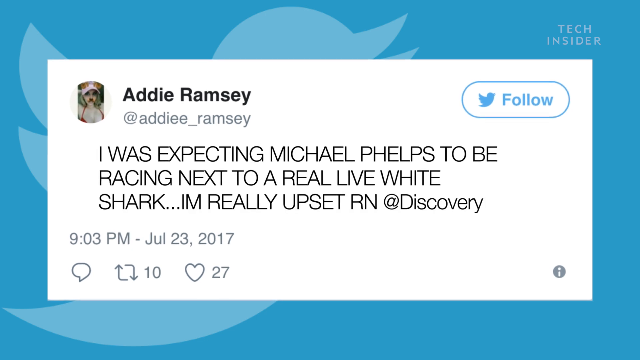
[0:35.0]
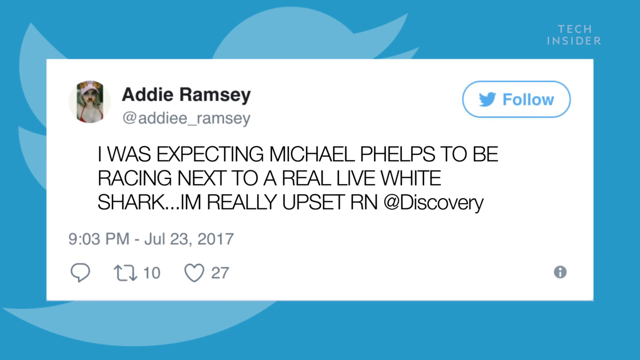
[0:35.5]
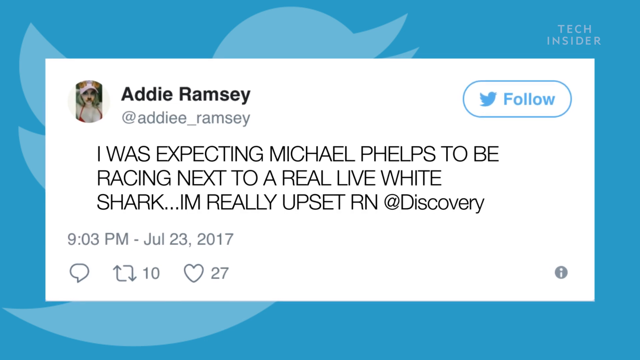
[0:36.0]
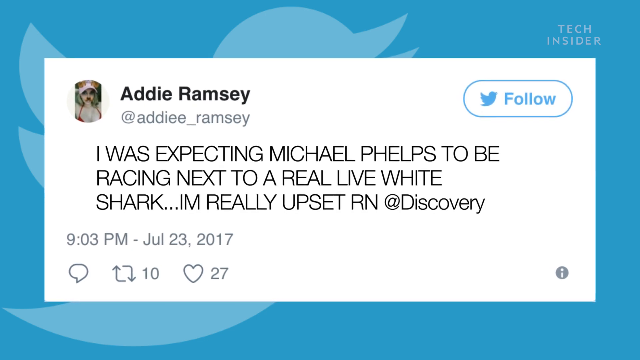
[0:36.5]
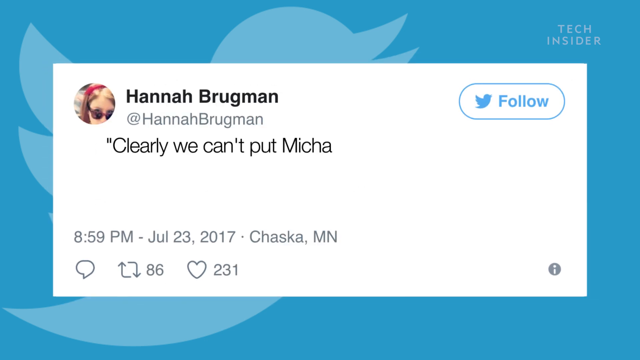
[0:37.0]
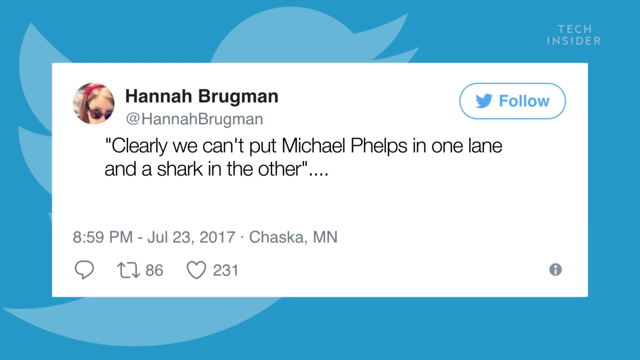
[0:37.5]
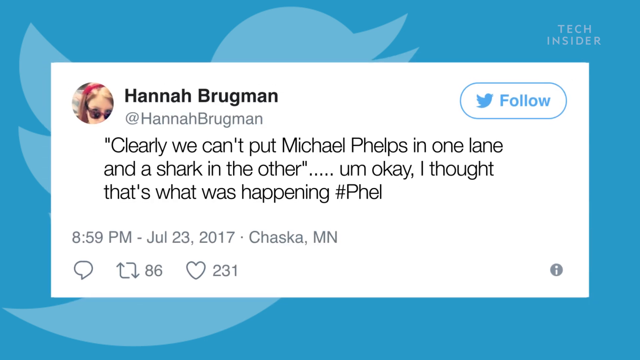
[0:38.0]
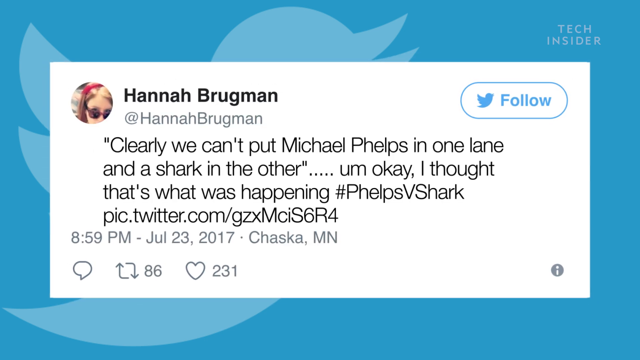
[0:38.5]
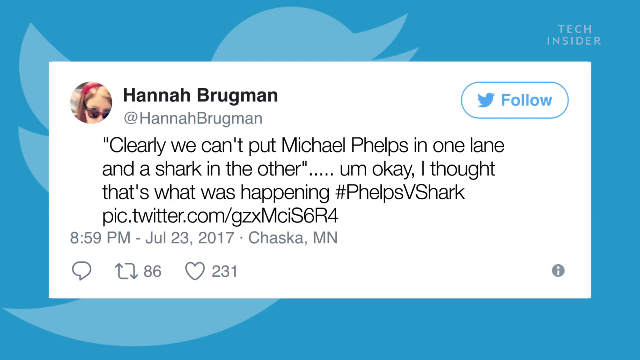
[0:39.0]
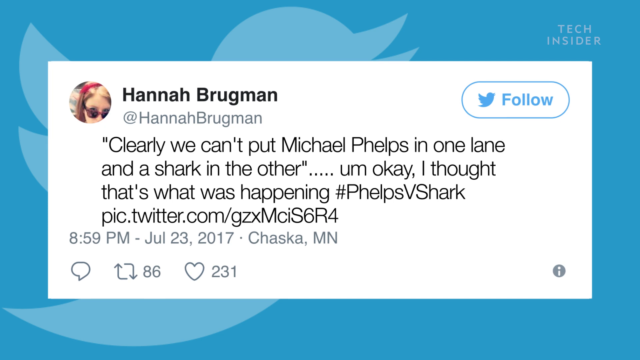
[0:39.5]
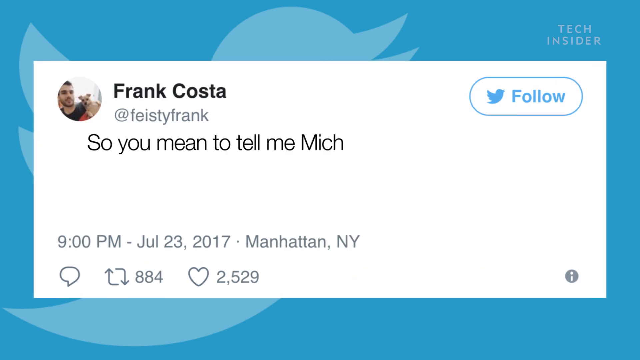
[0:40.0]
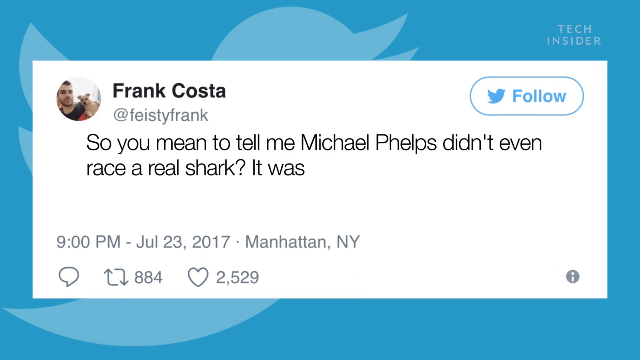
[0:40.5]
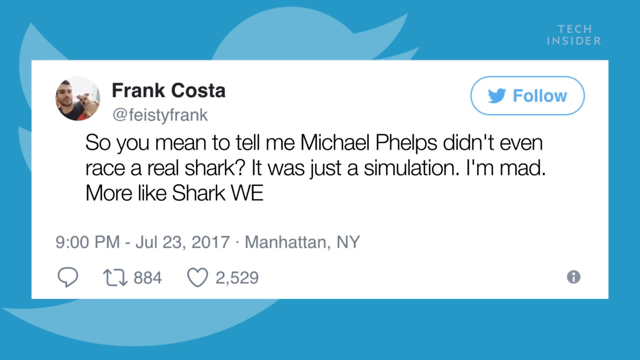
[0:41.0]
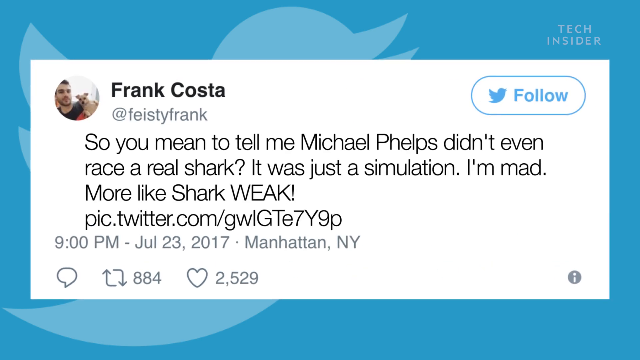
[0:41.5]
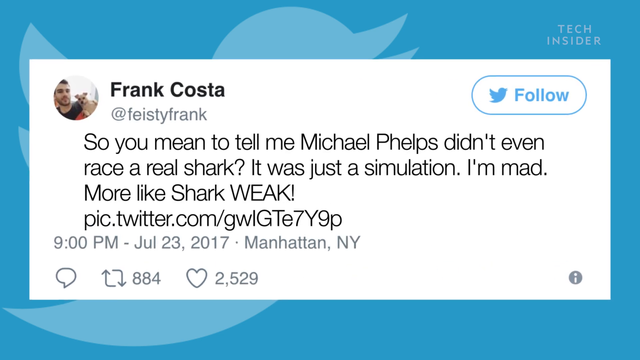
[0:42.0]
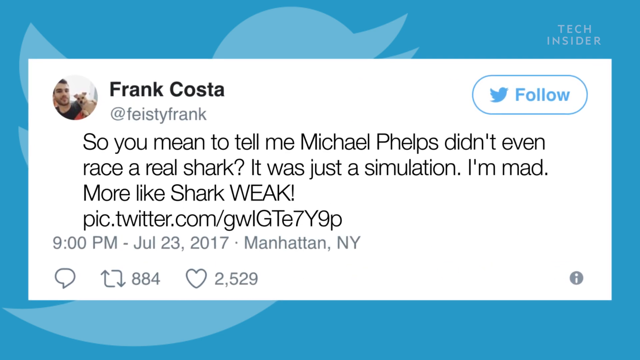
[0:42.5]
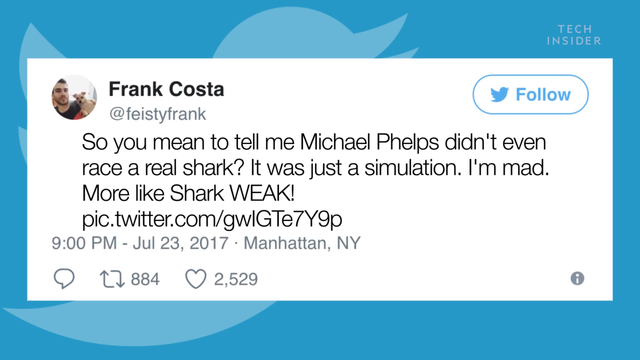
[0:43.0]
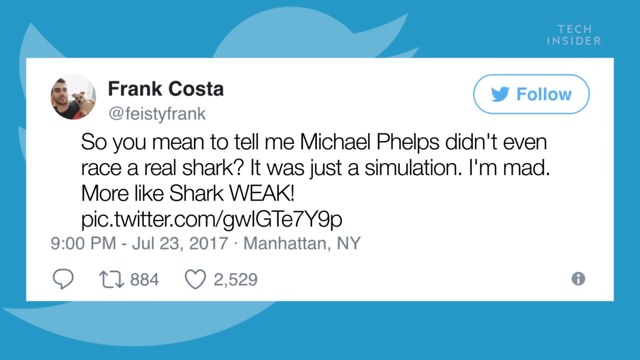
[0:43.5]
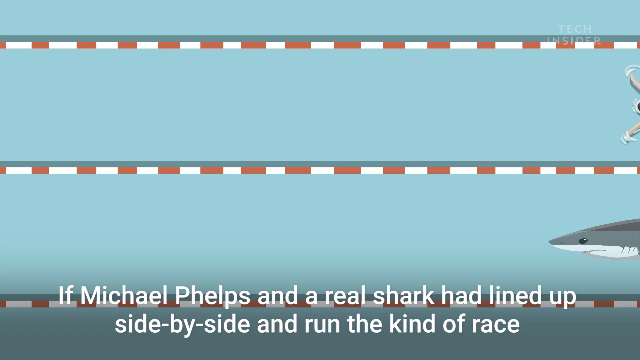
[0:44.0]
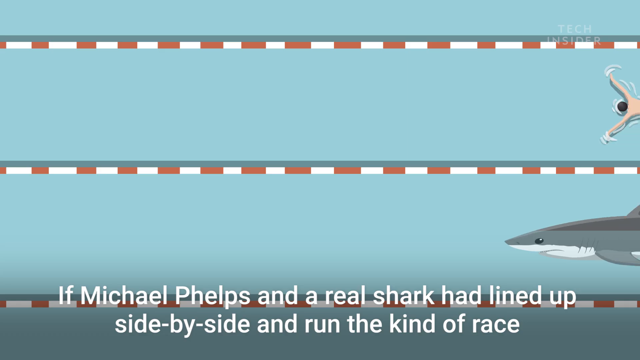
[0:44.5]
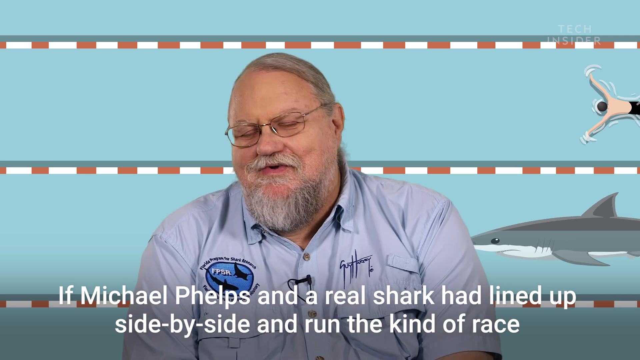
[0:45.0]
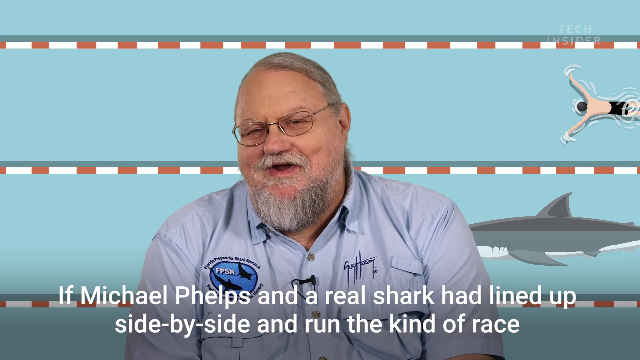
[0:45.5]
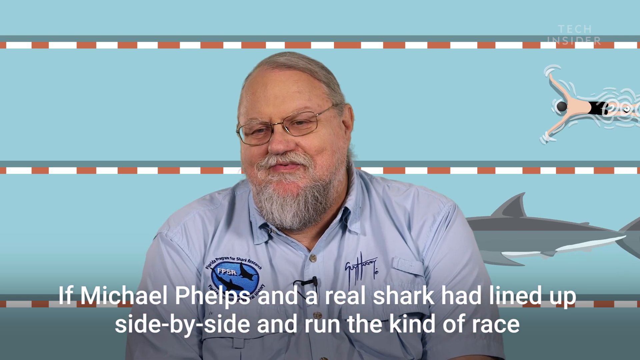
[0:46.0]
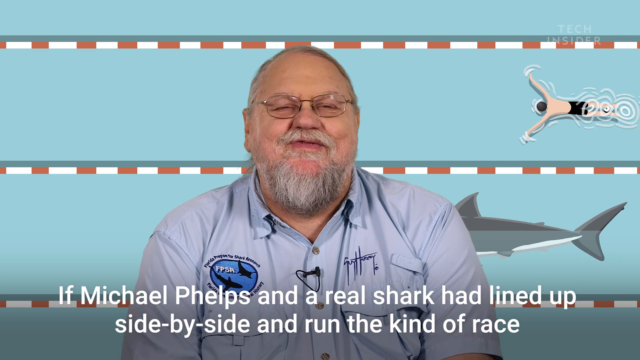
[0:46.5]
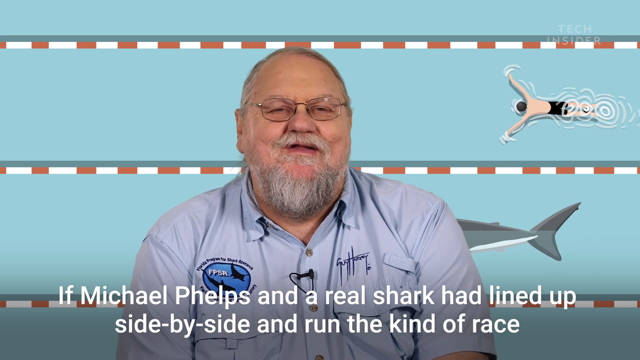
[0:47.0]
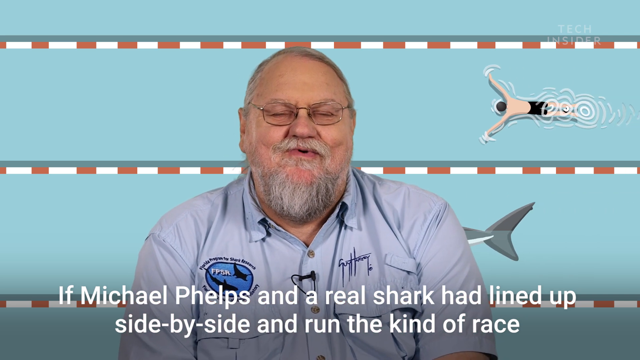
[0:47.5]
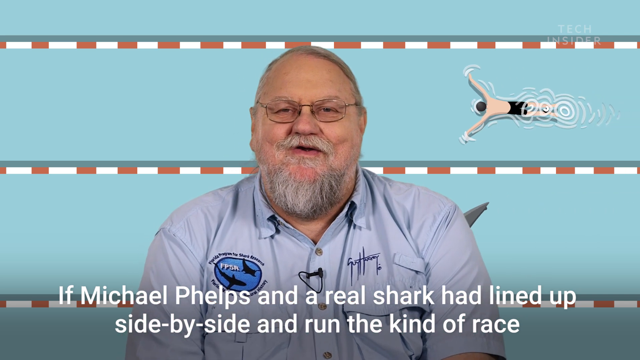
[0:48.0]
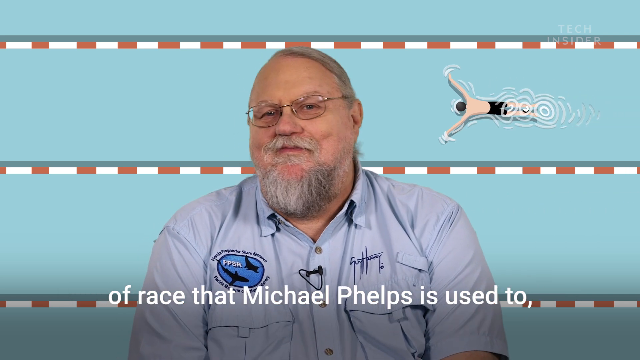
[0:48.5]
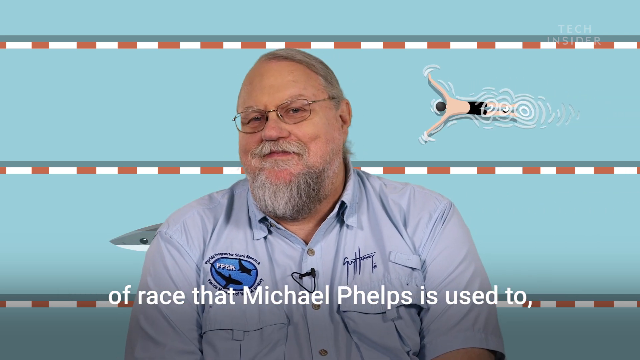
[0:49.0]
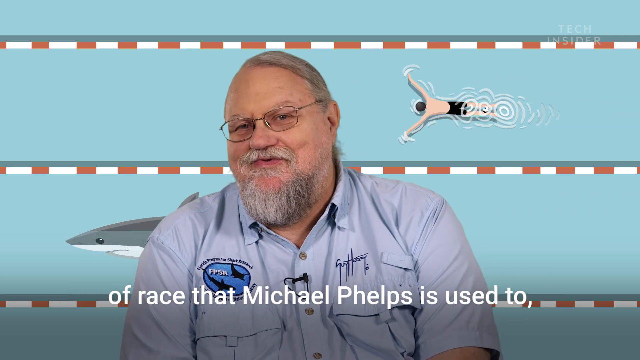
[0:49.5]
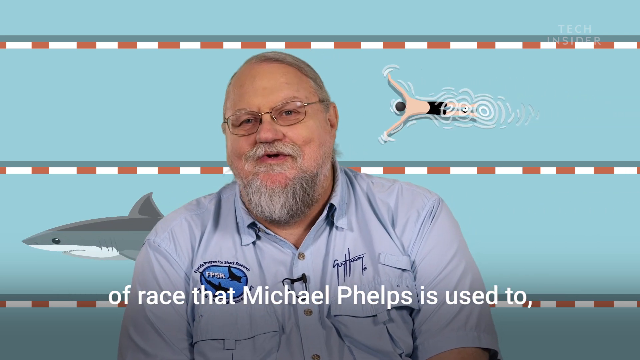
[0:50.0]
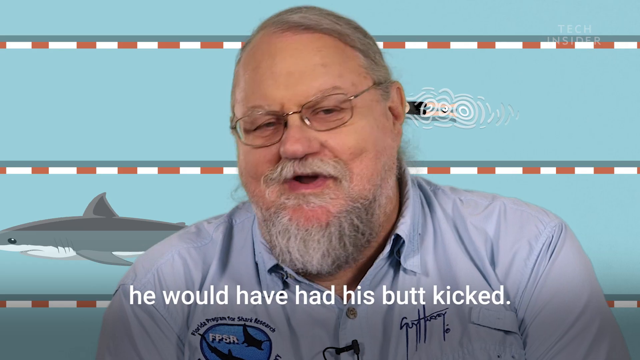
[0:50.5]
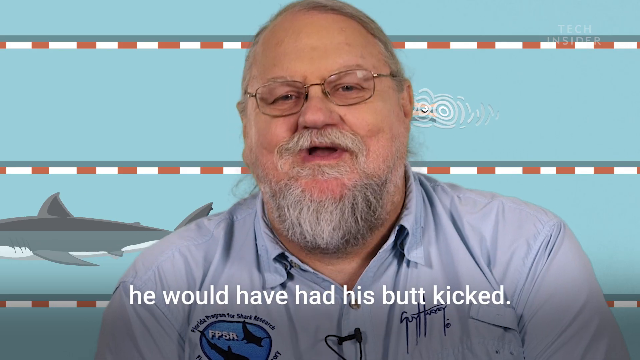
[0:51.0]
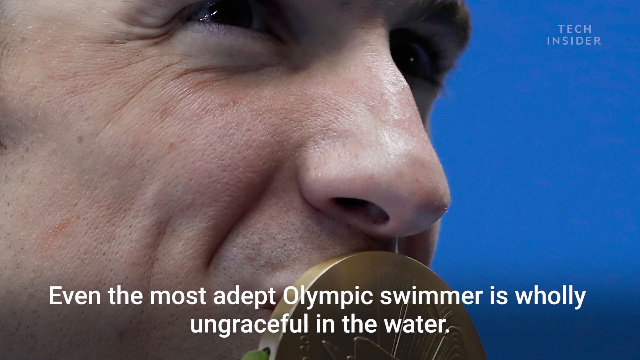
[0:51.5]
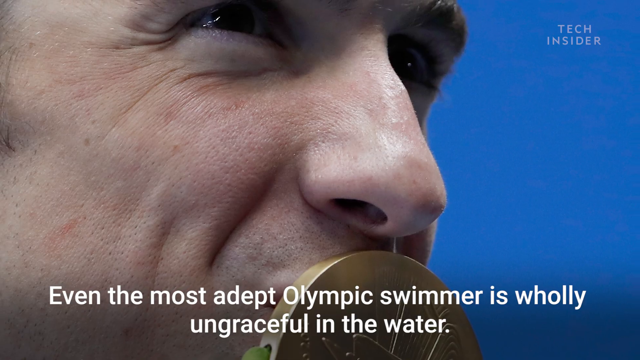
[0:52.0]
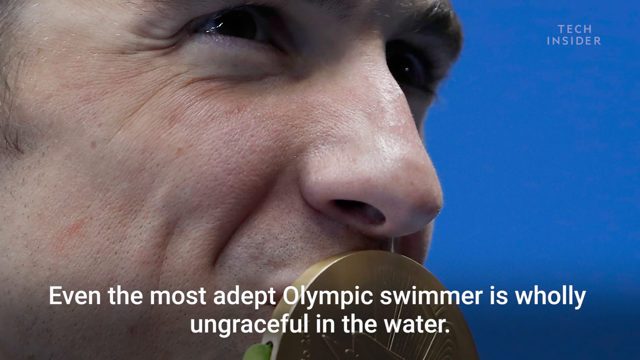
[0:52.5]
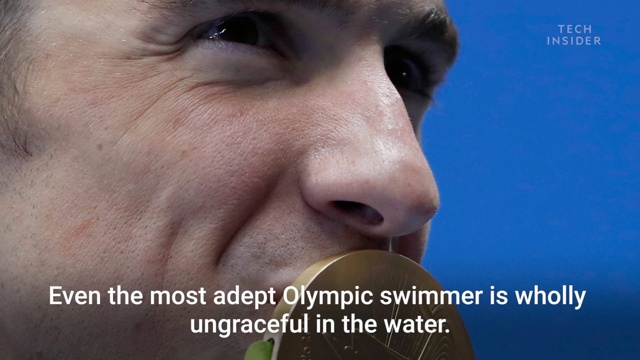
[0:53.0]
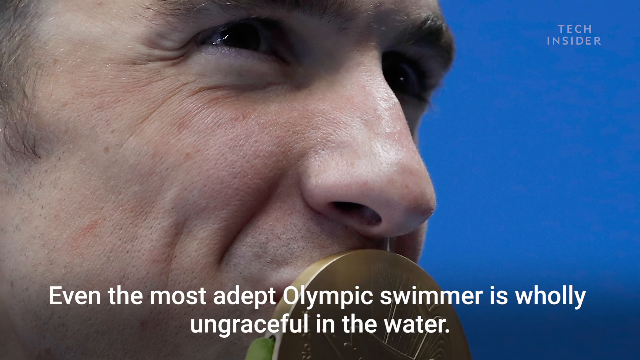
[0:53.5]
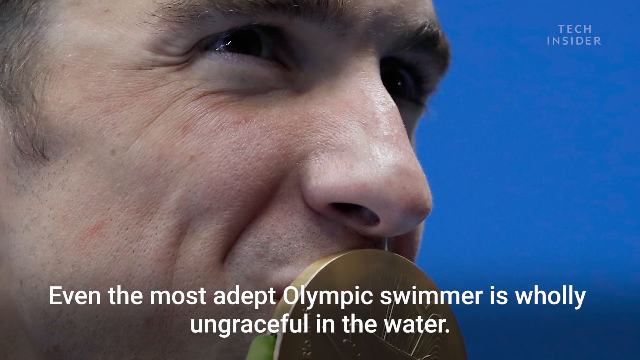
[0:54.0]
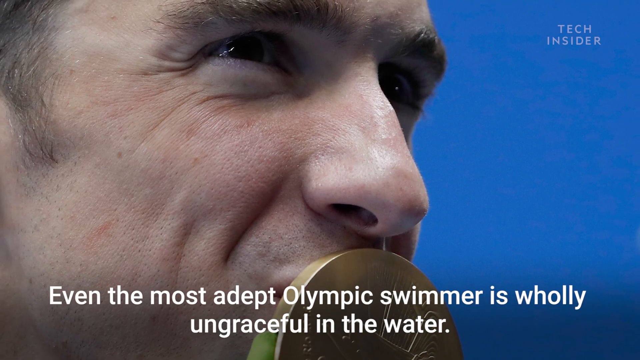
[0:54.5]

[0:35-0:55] Phelps gives an angry snarl. He is in a pool.